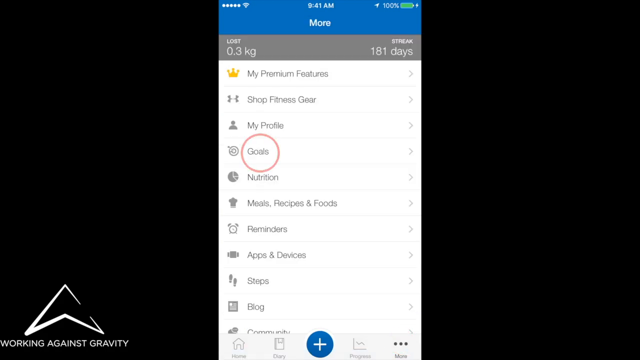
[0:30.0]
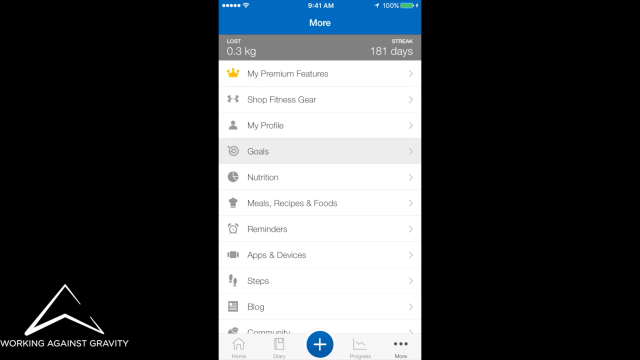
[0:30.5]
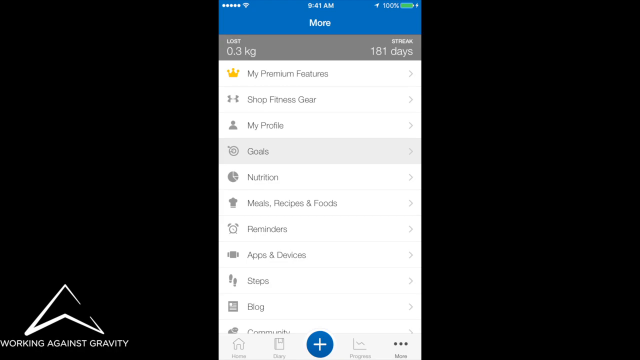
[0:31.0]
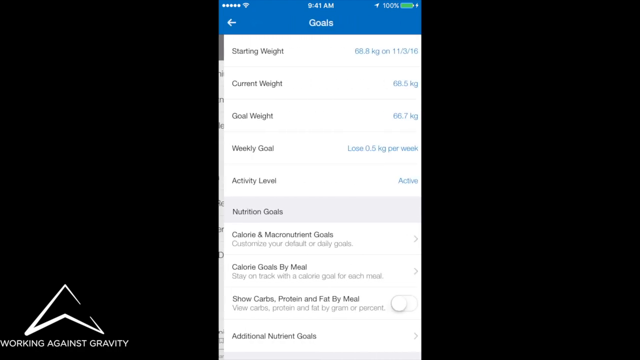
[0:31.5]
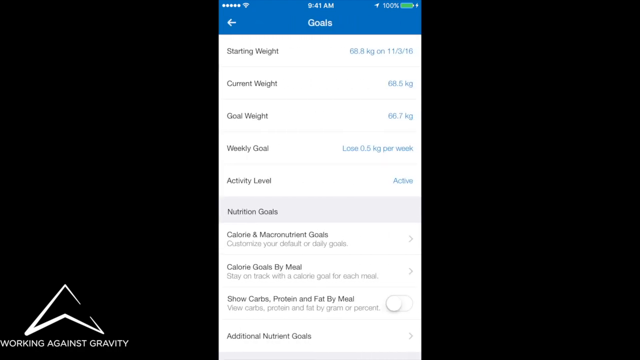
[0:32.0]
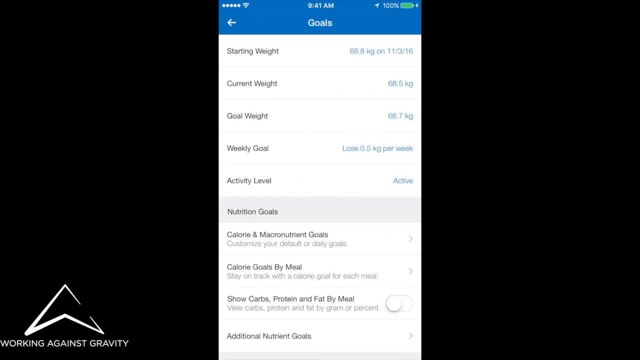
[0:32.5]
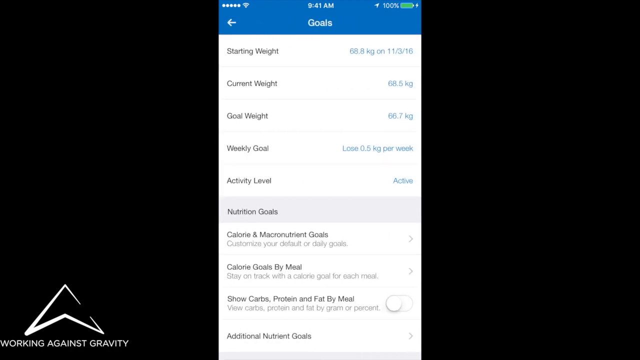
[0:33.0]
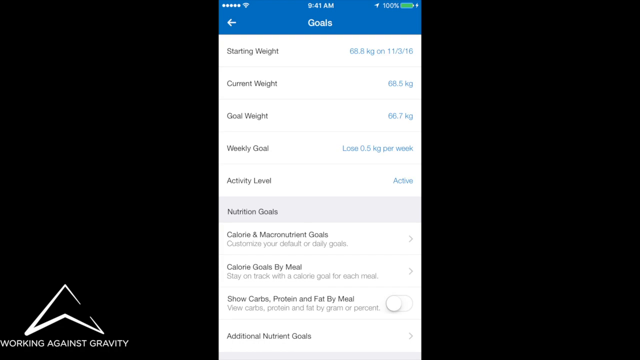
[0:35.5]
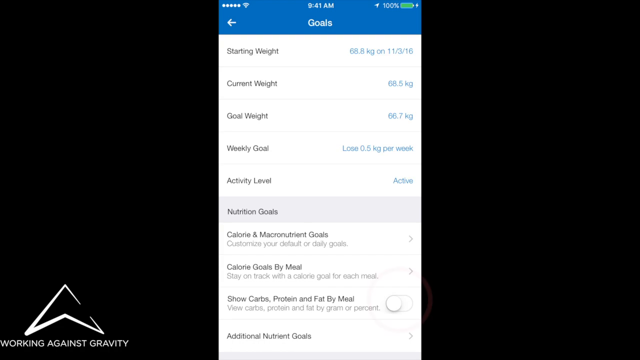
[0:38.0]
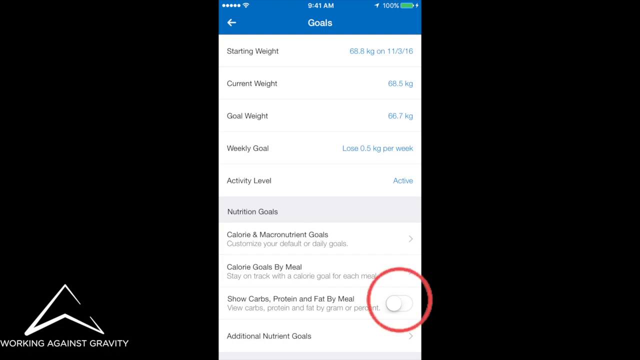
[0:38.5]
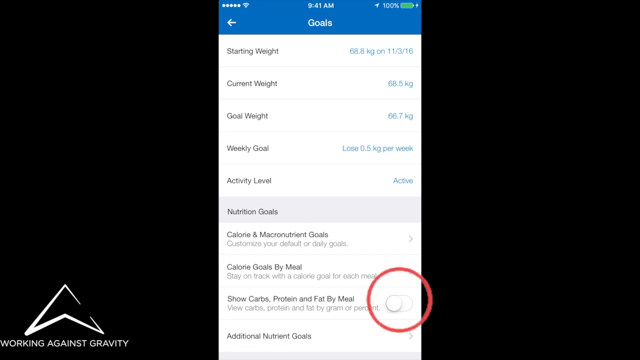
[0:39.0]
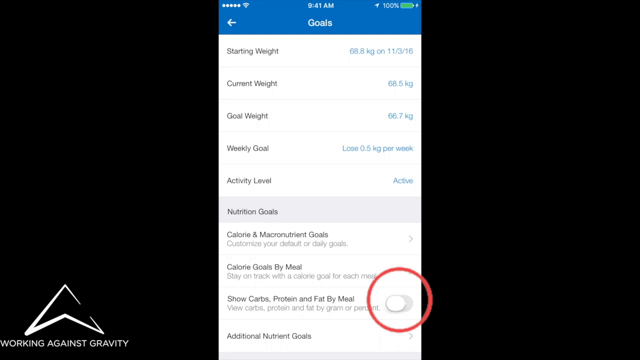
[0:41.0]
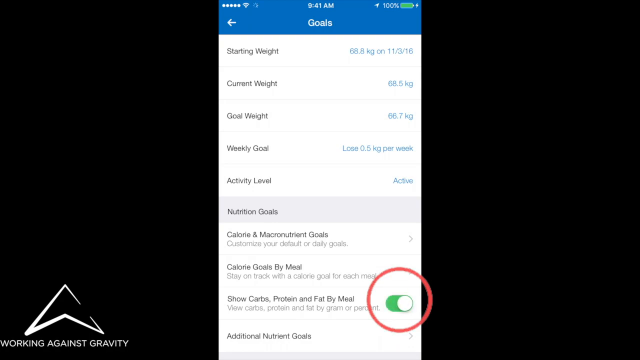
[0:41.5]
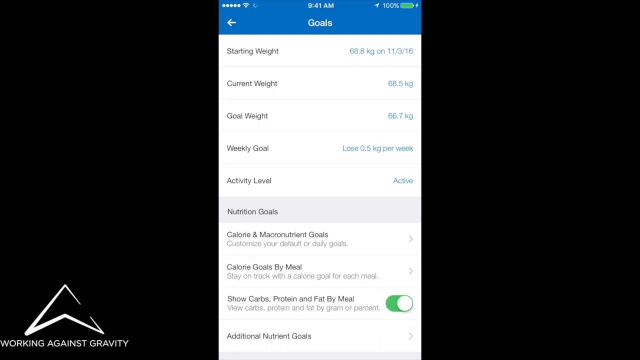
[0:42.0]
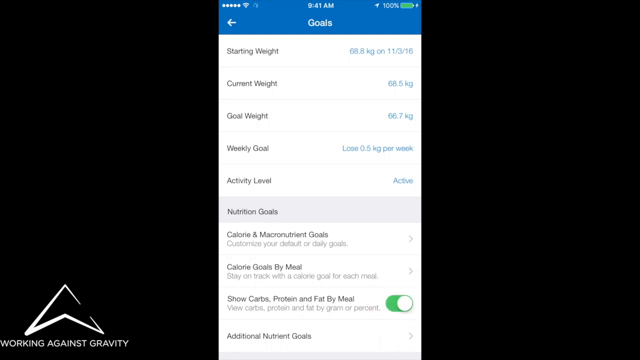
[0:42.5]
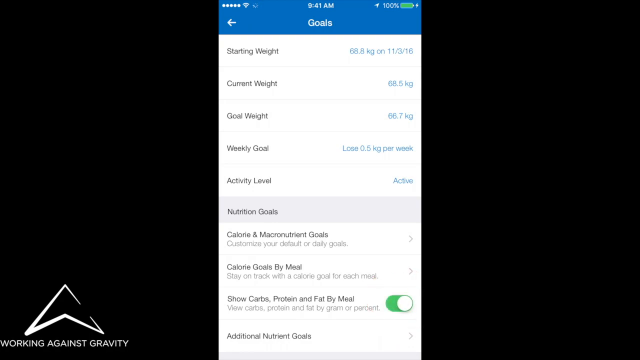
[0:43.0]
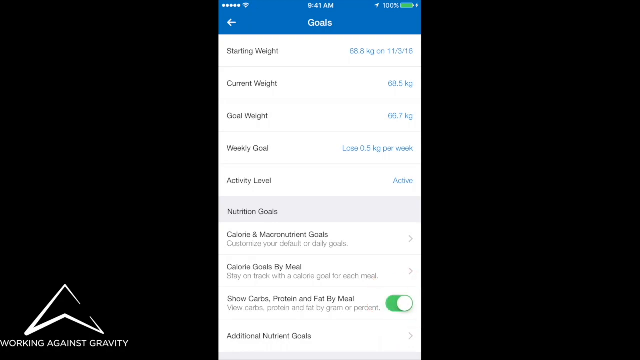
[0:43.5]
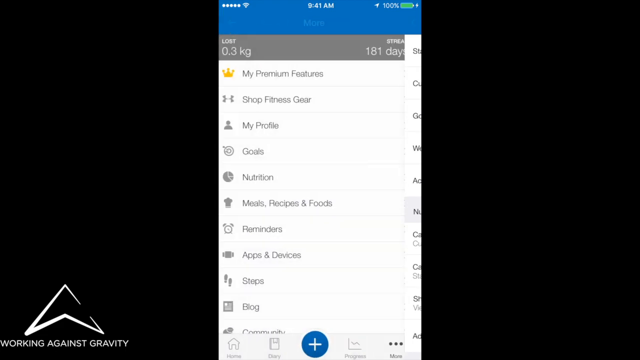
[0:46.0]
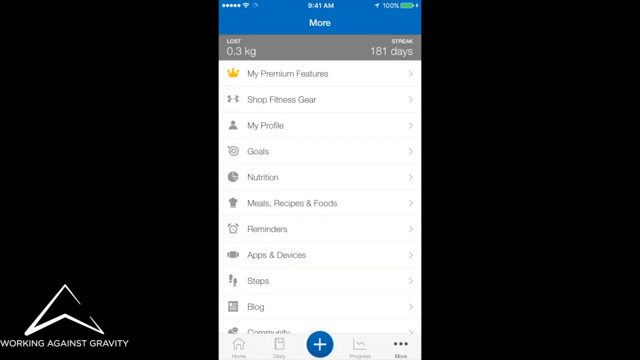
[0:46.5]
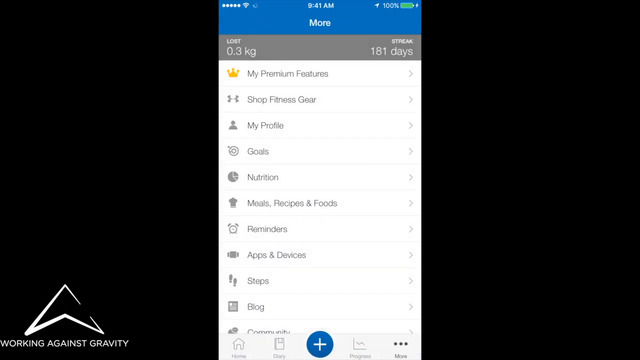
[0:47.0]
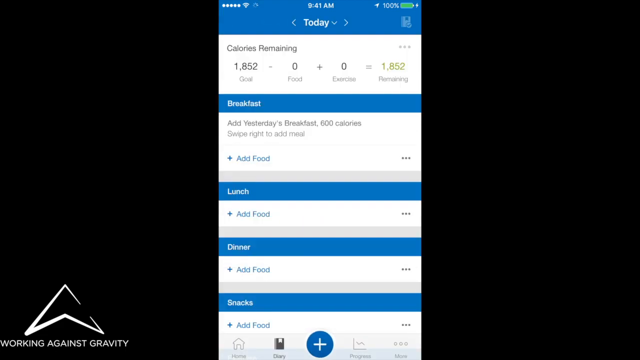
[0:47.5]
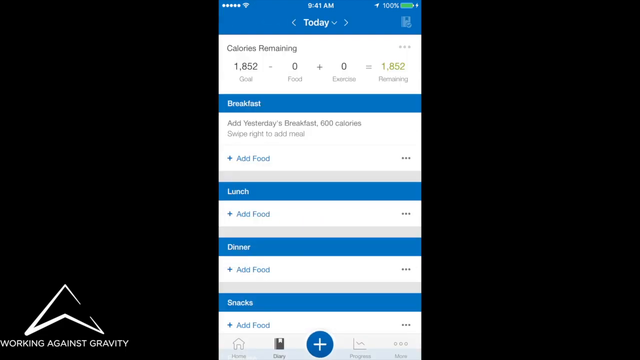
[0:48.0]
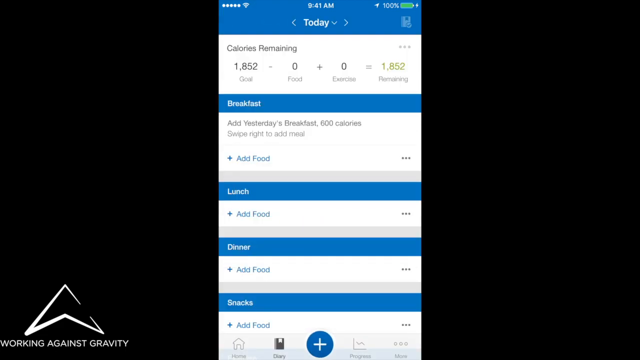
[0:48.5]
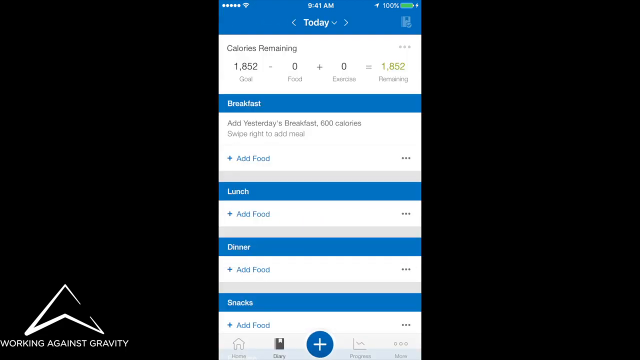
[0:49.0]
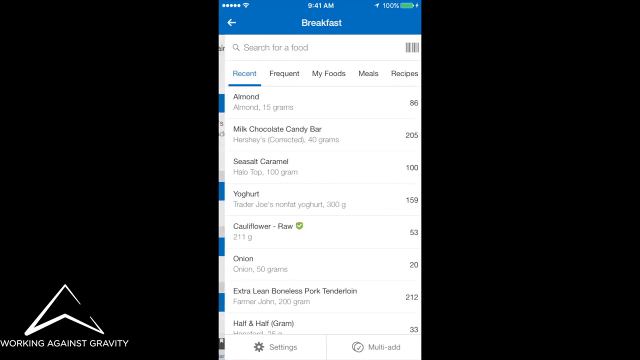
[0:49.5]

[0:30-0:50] The screen switches to a heading reading "More" in white letters, with a capital M and the rest in small caps. Below it, a thinner grey strip runs from left to right across the screen. On its left, "LOST" appears in all-caps white letters with "0.3 kilogram" below it, and on the far right of the strip it reads "STREAK" and "181 days", all in white. Just below is a line with a small crown picture on the left and, to its right, "MY PREMIUM FEATURES" in grey. All of these headings are on a white background, each with a faint grey arrow at the far right. The next line has a small Under Armour logo with "SHOP FITNESS GEAR" to its right. The next has a picture of a person or an outline of a person with "MY PROFILE", followed by one reading "GOALS" with a dartboard picture. All the pictures are grey, and "GOALS" has a red circle around it. The app then switches to the goal screen, which reads "START WEIGHT" 68.8 kilograms with the date the 11th of the 3rd of '16, "CURRENT WEIGHT" 68.5 kilogram, "GOAL WEIGHT" 66.7 kilogram, "WEEKLY GOAL" loss of 0.5 kilogram per week, and "ACTIVITY LEVEL" active.